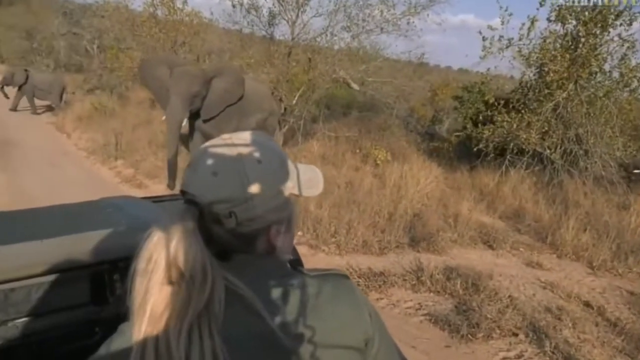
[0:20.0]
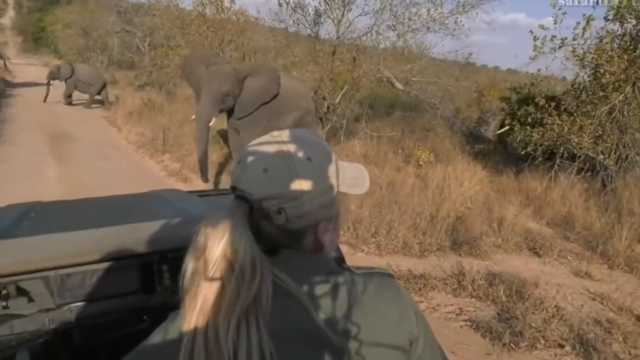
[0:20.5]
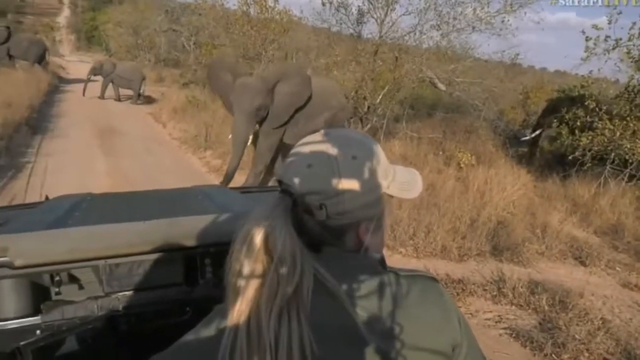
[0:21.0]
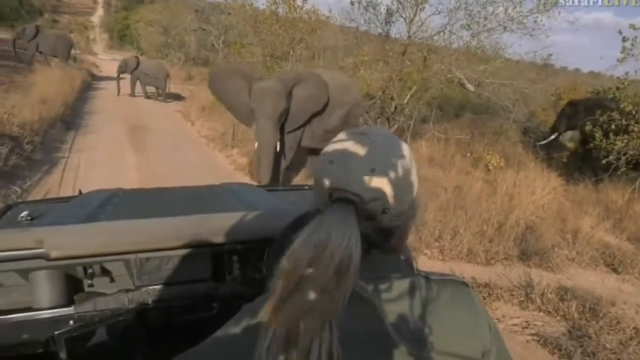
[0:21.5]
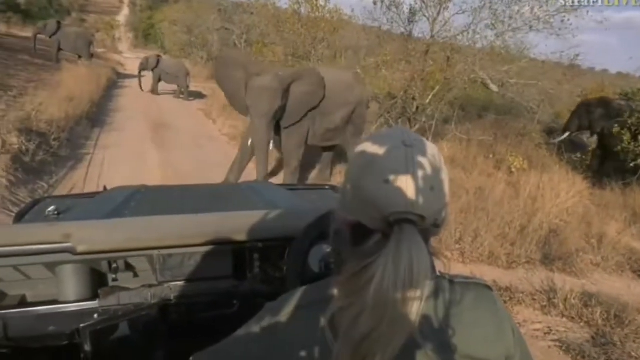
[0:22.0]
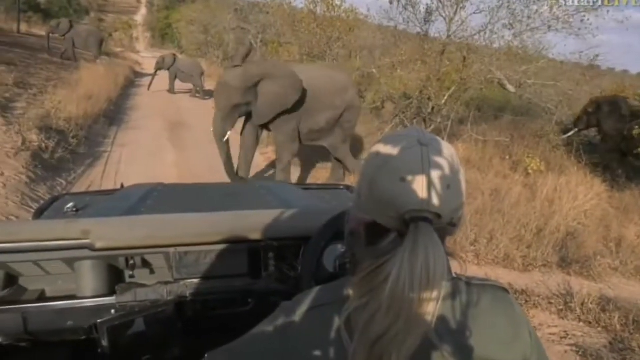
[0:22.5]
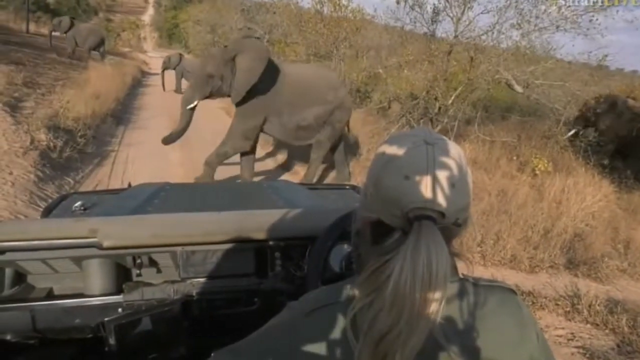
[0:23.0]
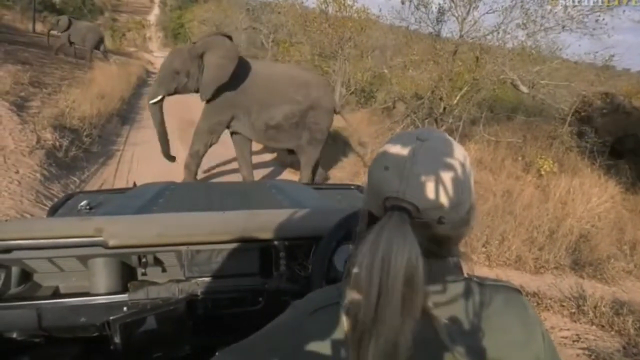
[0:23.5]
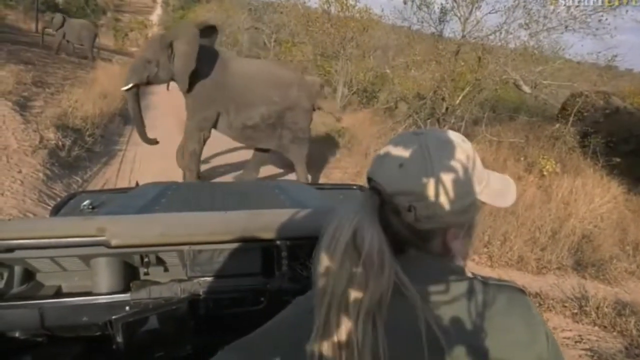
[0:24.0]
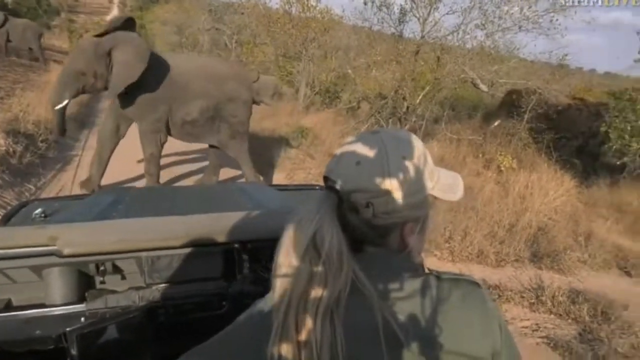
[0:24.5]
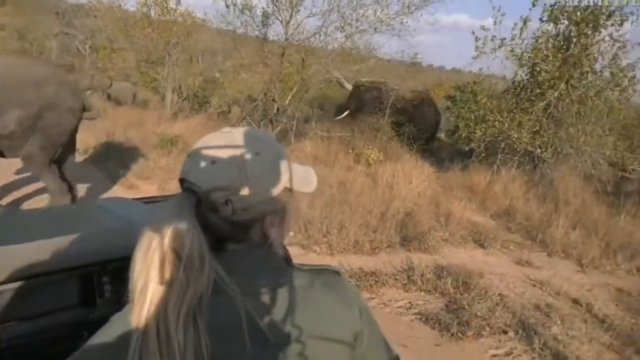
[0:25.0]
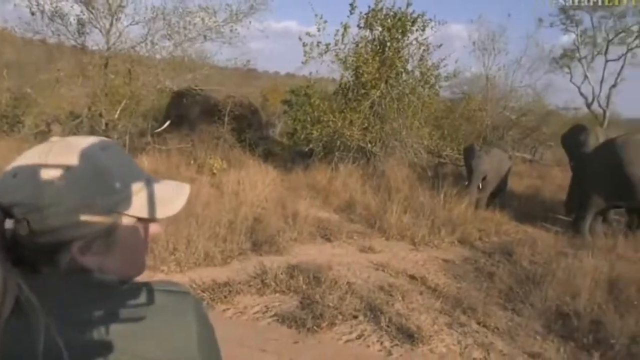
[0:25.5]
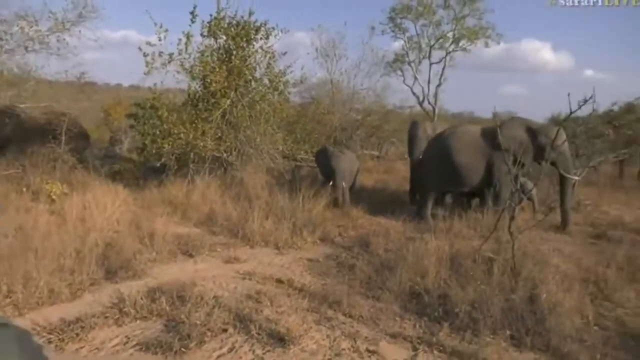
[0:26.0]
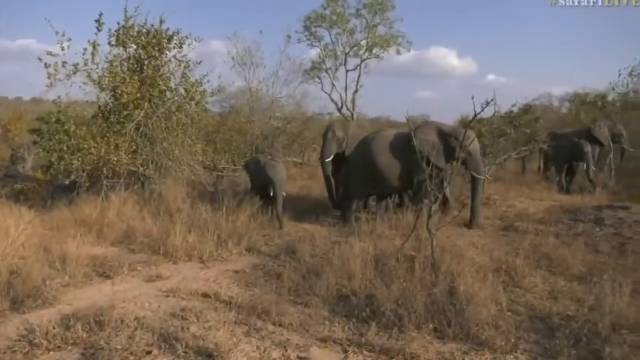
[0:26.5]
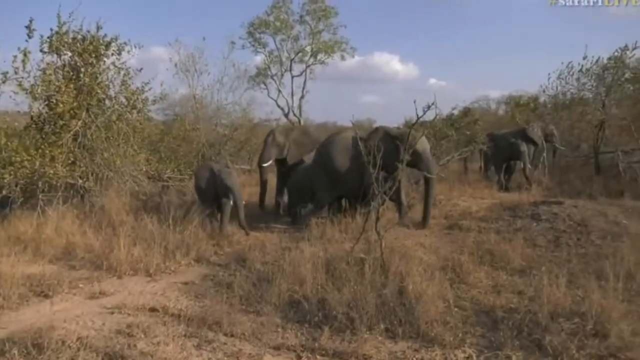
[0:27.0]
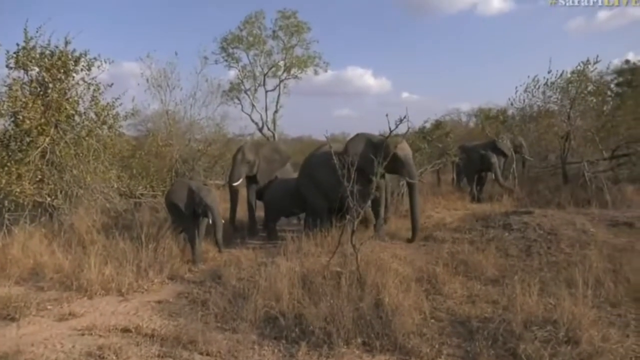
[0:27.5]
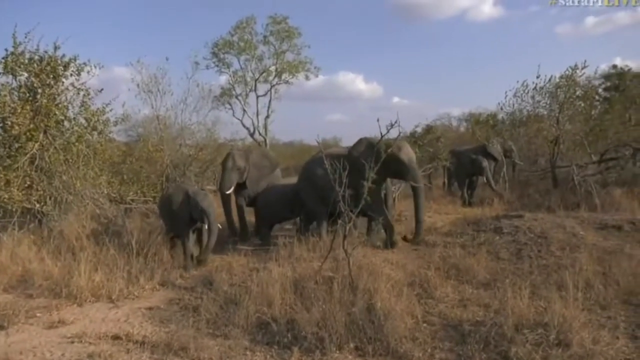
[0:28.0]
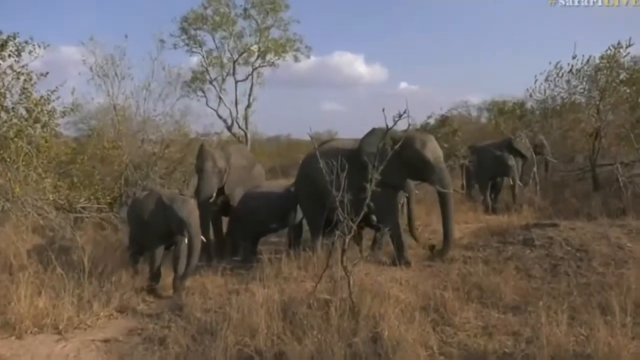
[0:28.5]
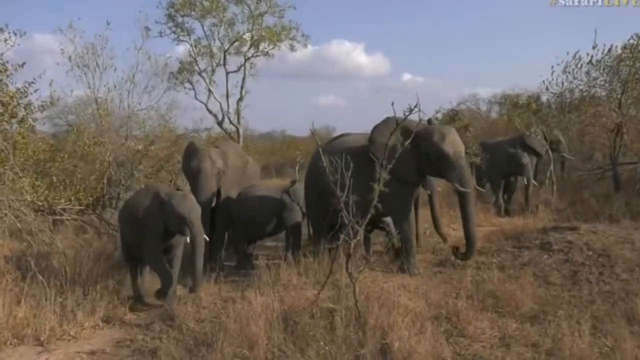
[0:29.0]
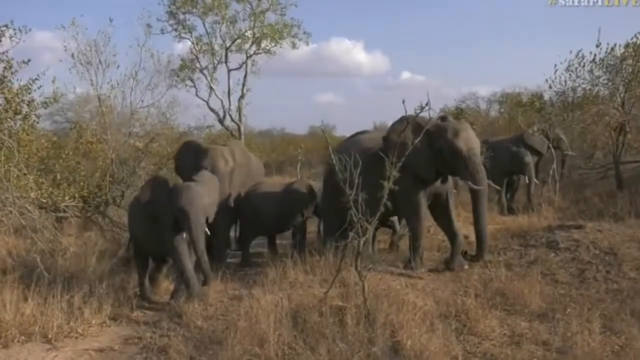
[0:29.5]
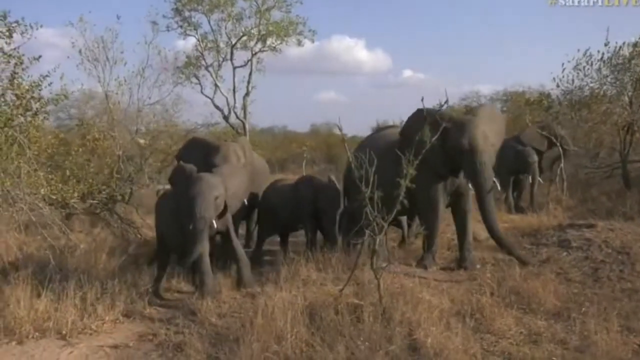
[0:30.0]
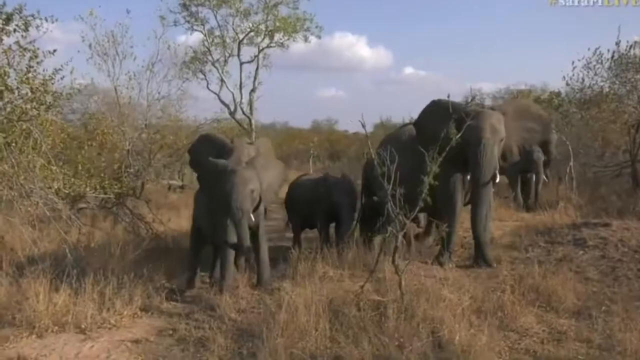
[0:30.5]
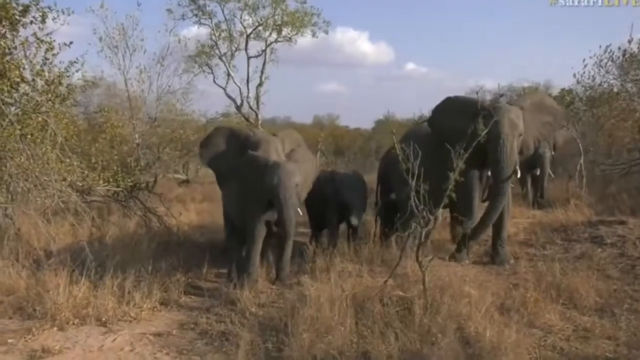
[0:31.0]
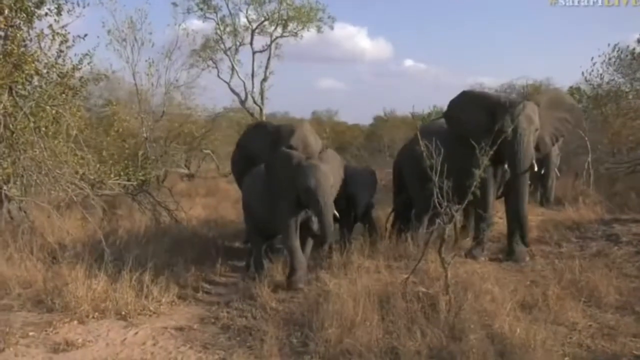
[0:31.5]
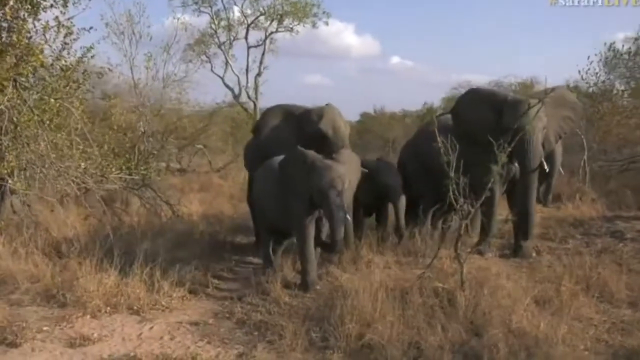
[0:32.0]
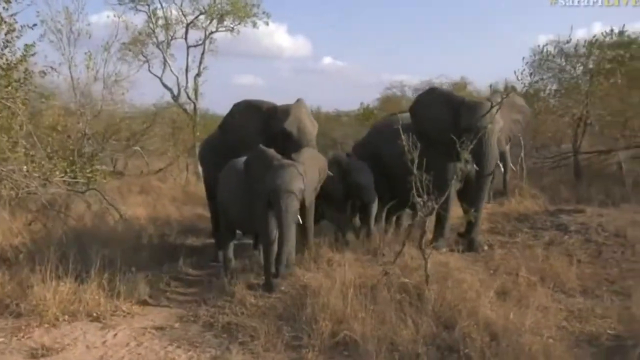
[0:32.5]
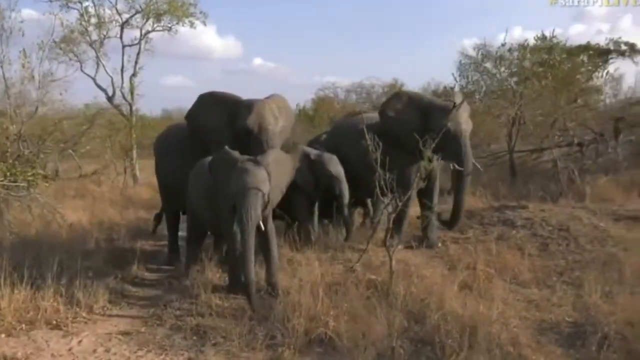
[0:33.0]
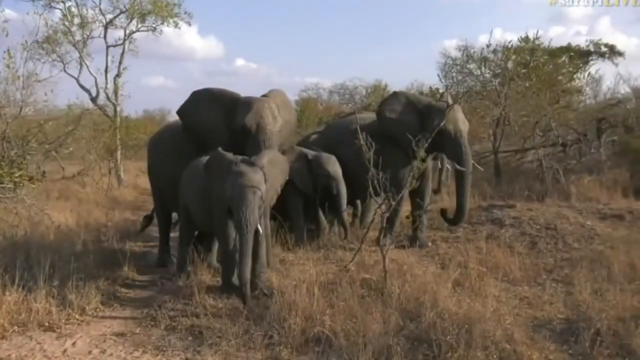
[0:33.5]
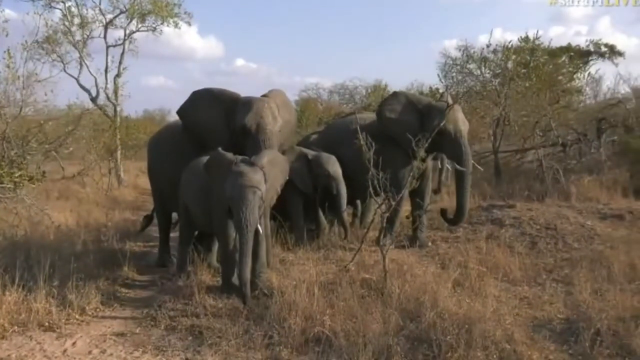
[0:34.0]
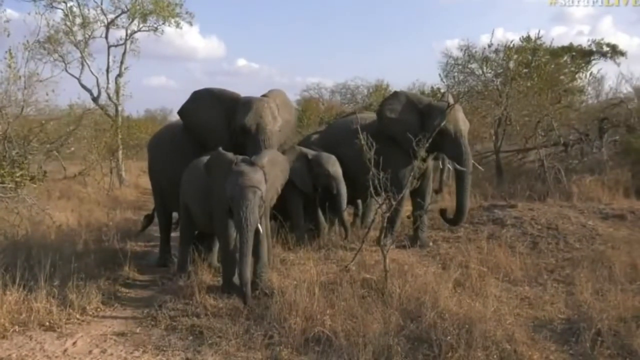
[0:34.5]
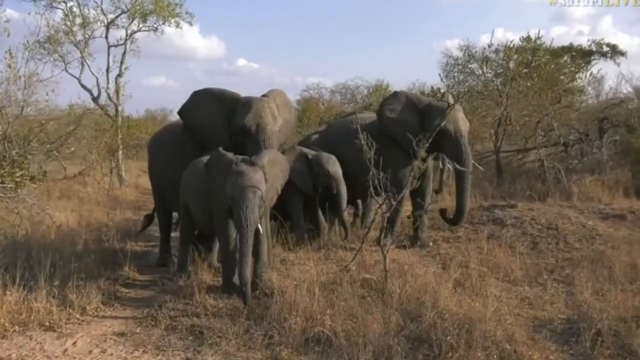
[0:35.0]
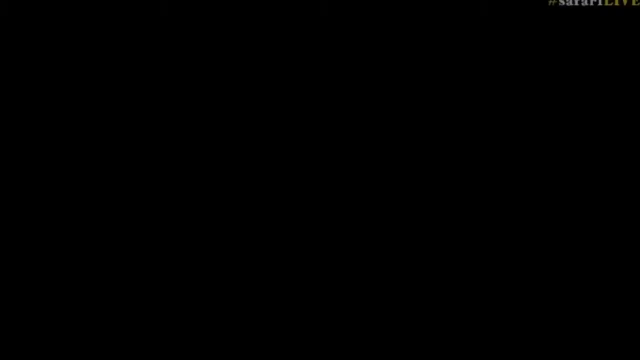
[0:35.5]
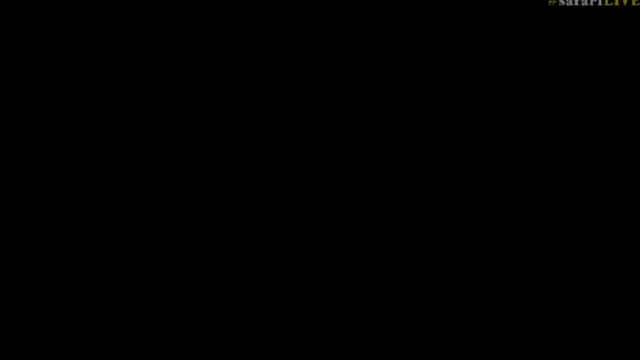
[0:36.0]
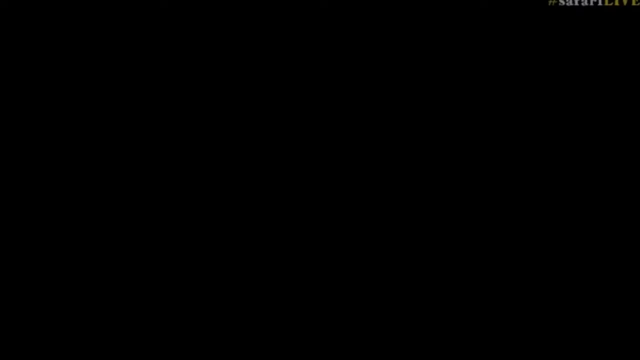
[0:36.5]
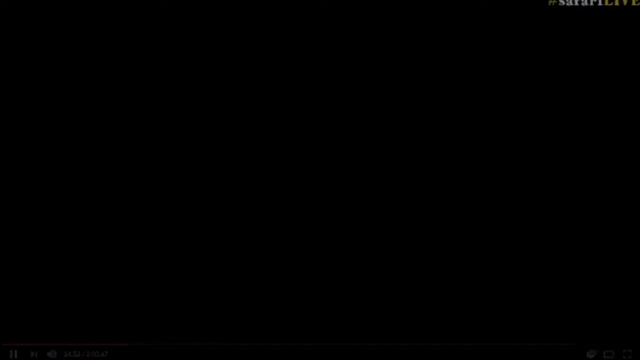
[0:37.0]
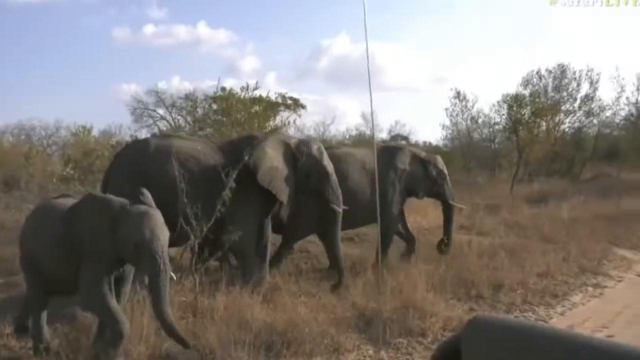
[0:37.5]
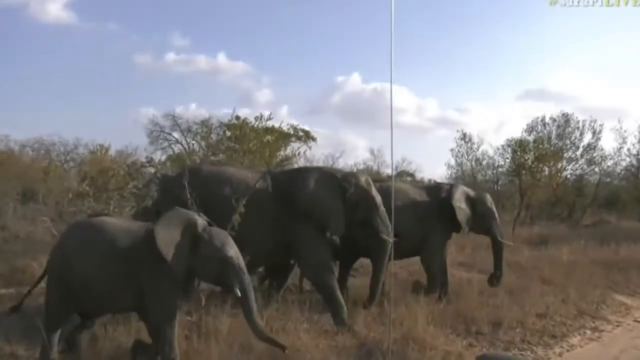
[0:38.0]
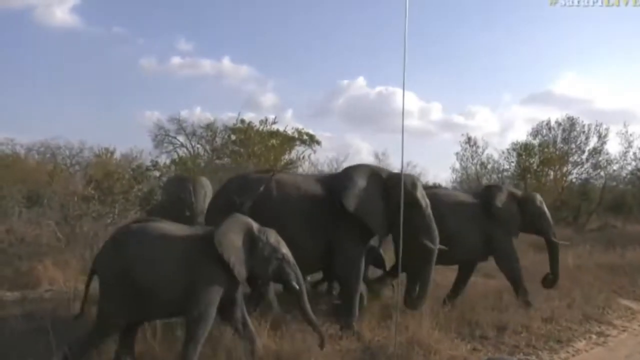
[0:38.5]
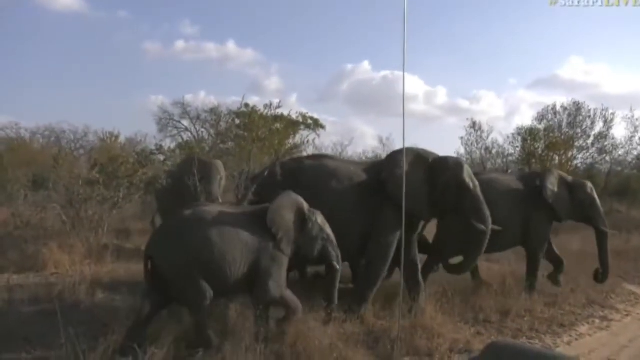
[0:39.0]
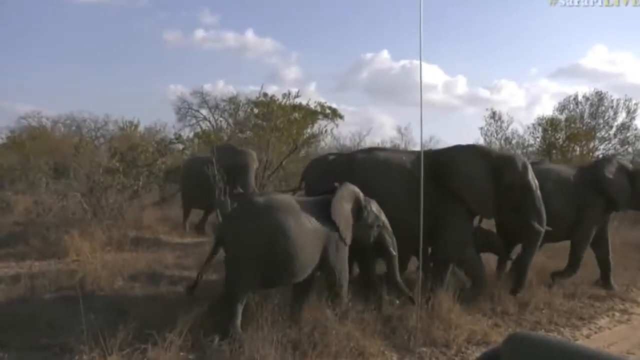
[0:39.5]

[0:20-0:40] A person is outside in a vehicle, their shadow cast slightly on the vehicle, looking at elephants crossing a road; the elephants seem used to this crossing. The same family of elephants seen earlier walks together, their shadows cast on the ground, near on the left. As the vehicle moves on, the elephants pass by, seemingly heading in the opposite direction from the vehicle as it goes one way down the road, and they start to make their way upward. They are led by one of the larger elephants, possibly a mother or the leader of the herd. As they move, a thin line is visible on the right side, looking like maybe a thin pole or possibly a long rope.